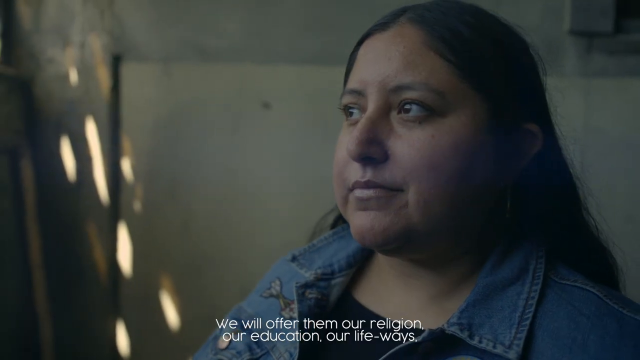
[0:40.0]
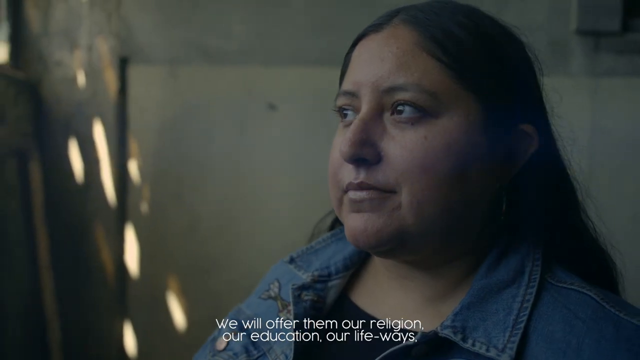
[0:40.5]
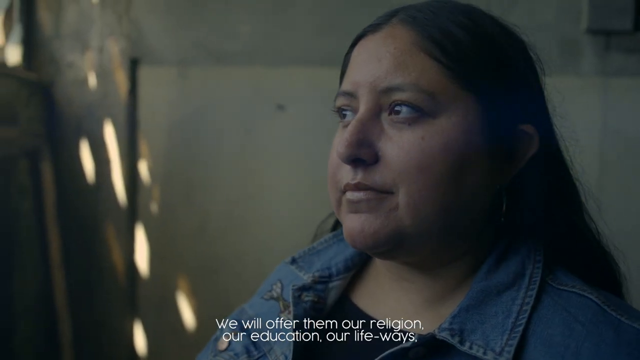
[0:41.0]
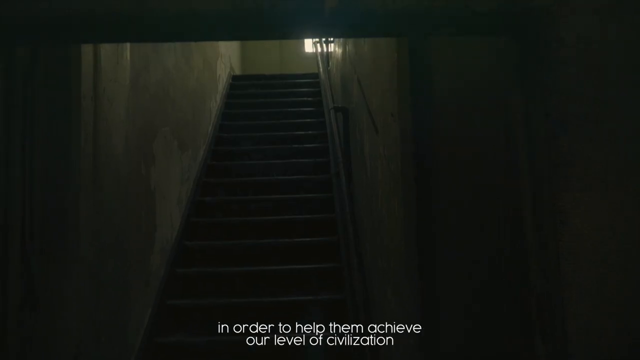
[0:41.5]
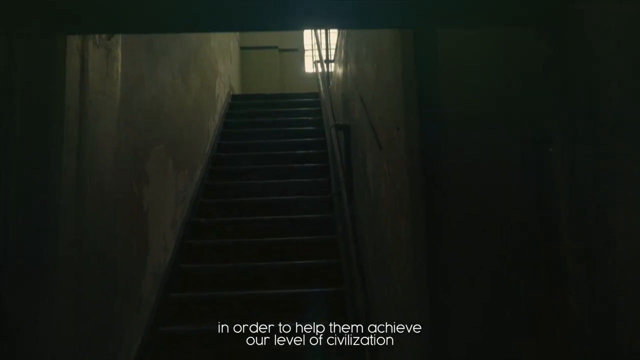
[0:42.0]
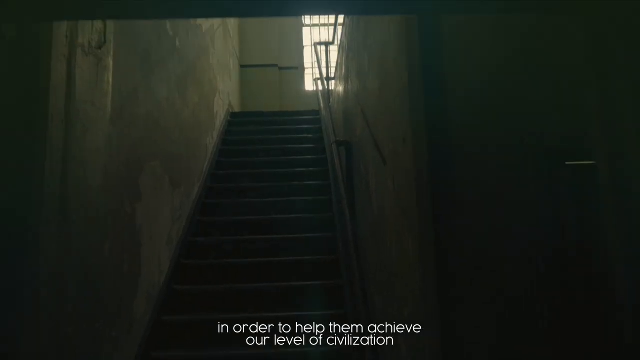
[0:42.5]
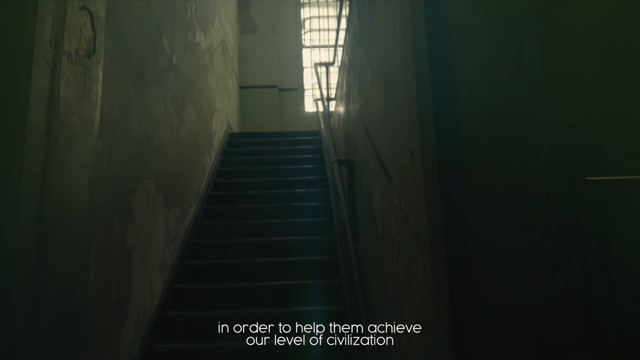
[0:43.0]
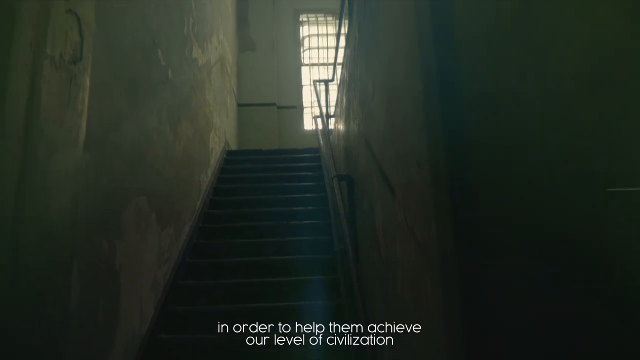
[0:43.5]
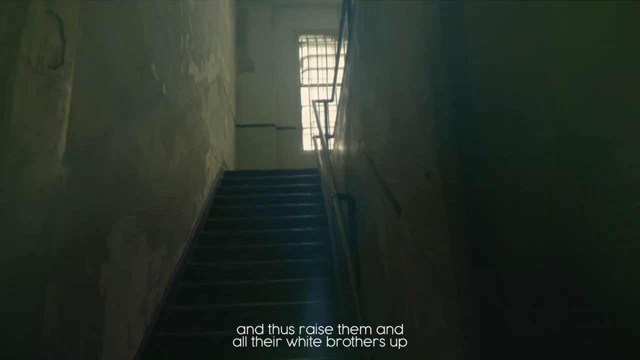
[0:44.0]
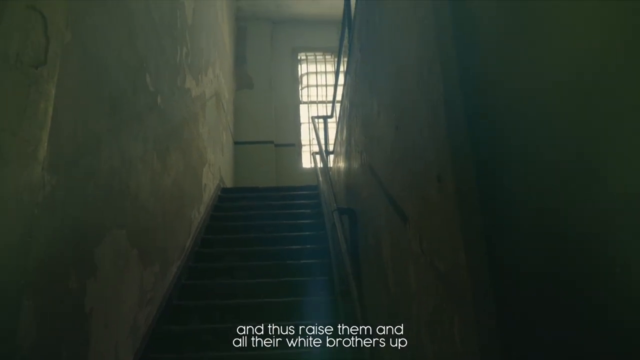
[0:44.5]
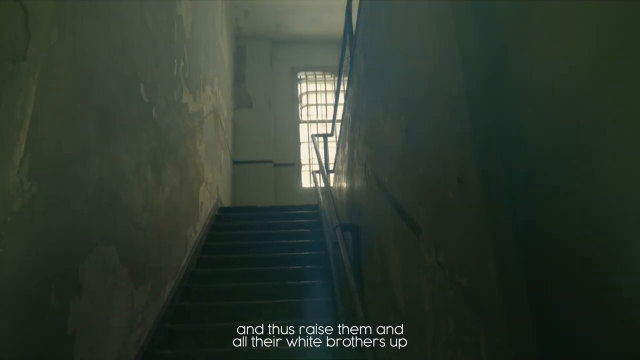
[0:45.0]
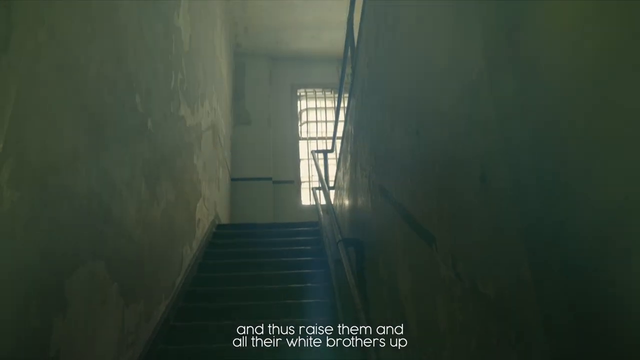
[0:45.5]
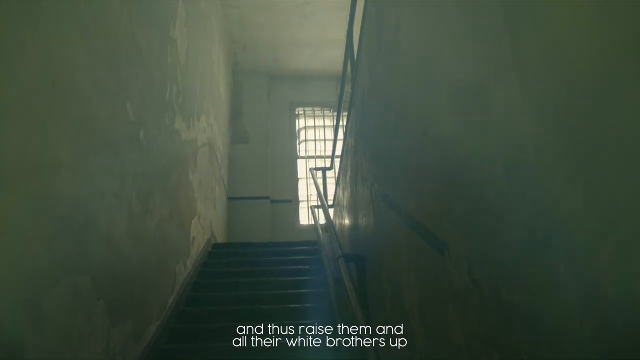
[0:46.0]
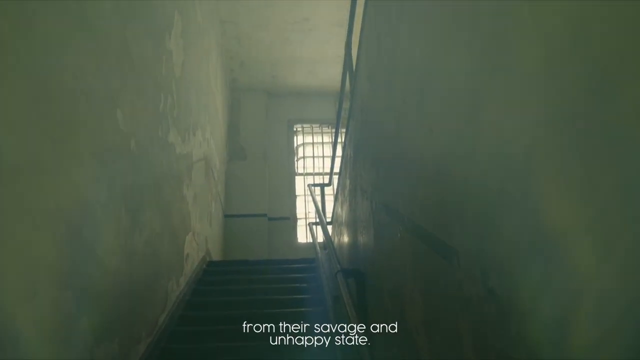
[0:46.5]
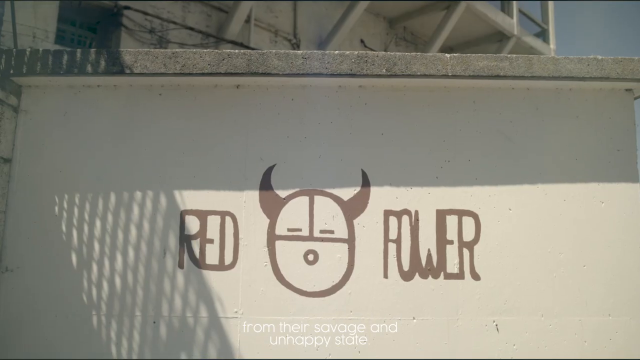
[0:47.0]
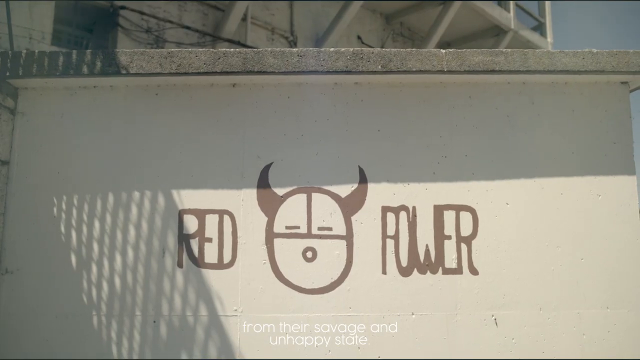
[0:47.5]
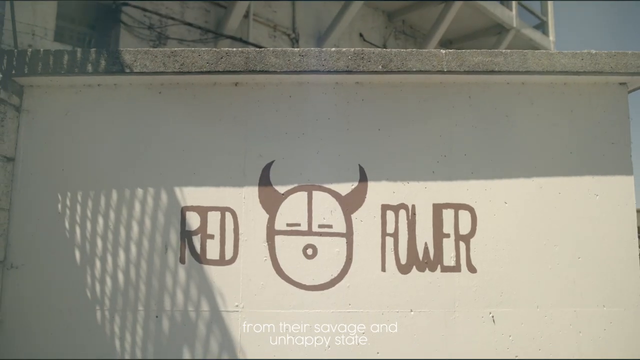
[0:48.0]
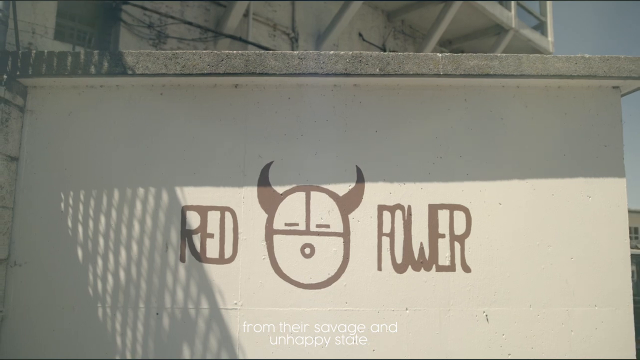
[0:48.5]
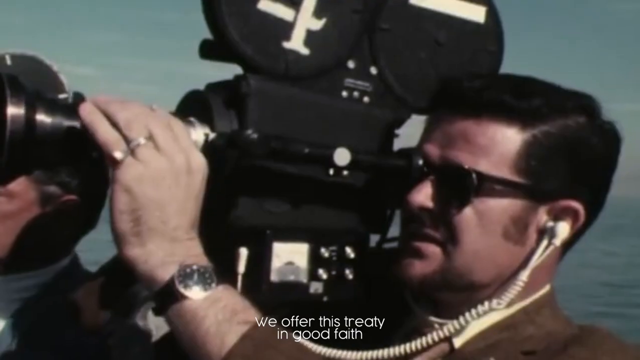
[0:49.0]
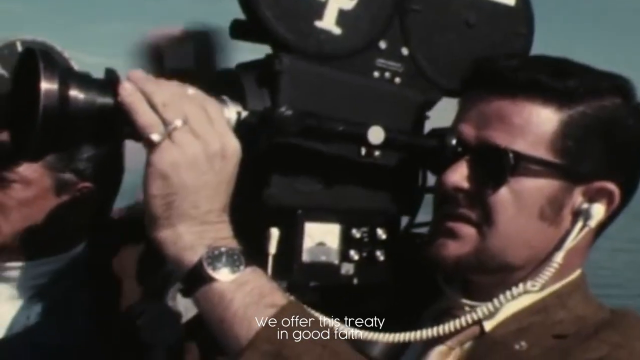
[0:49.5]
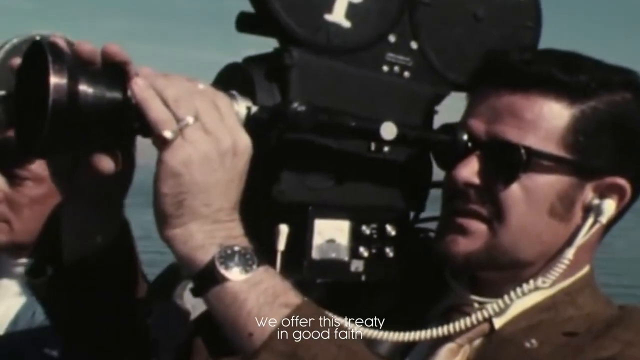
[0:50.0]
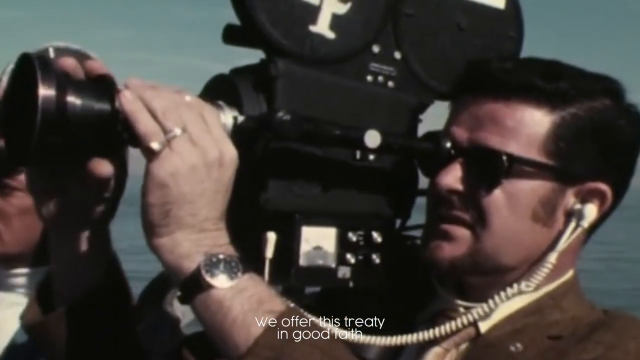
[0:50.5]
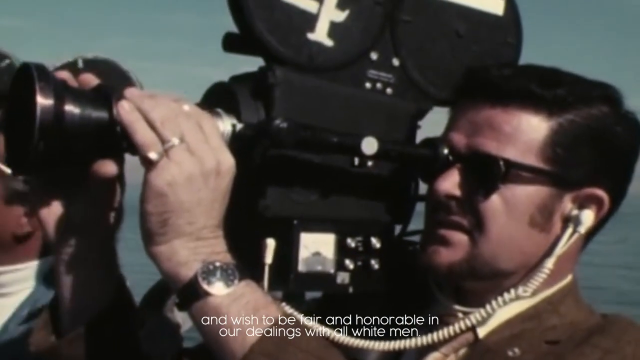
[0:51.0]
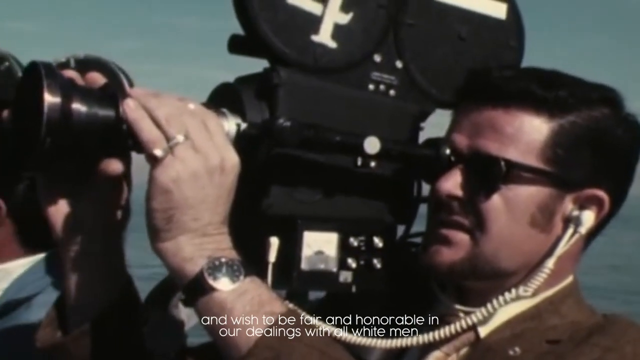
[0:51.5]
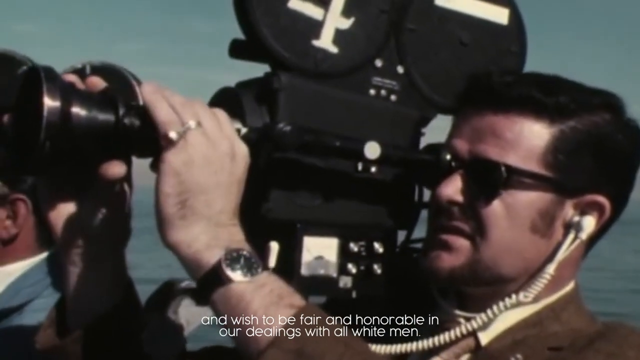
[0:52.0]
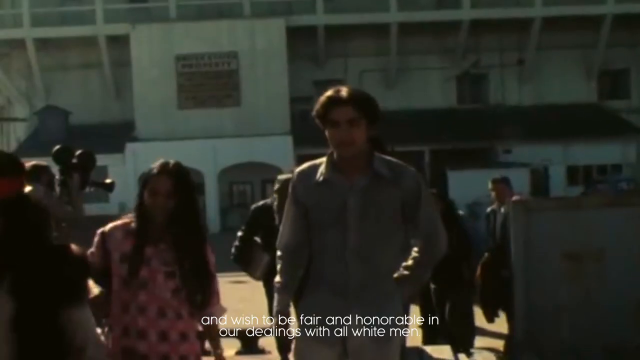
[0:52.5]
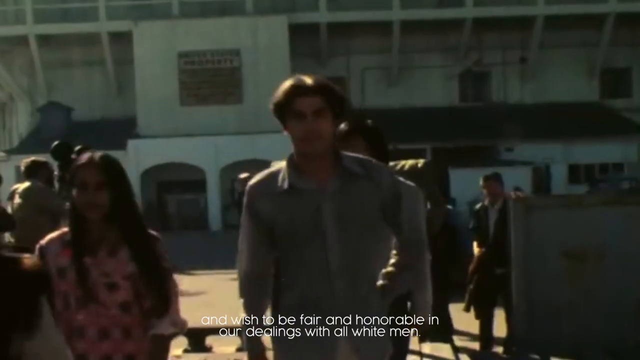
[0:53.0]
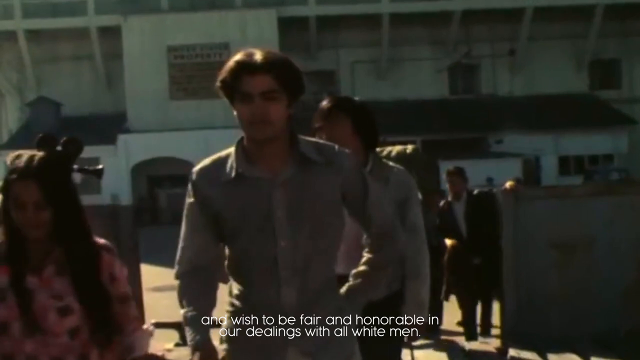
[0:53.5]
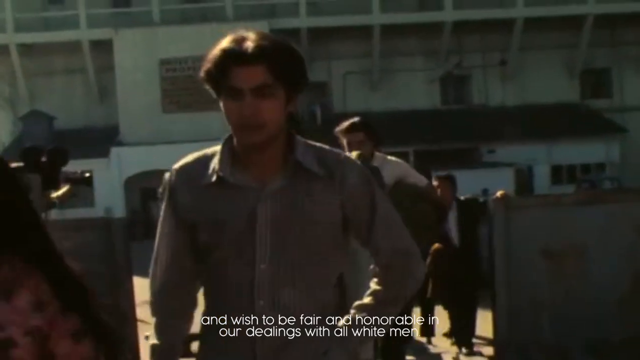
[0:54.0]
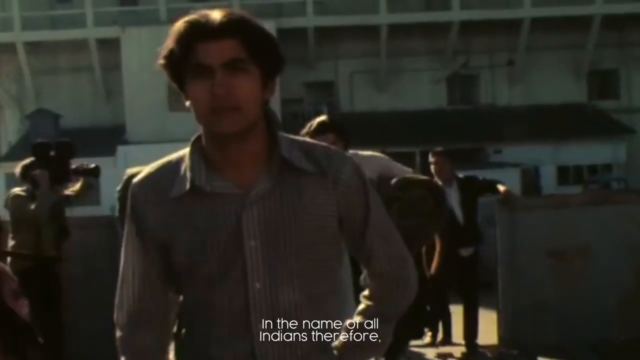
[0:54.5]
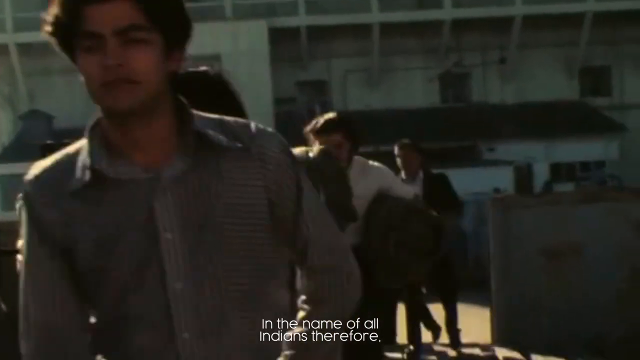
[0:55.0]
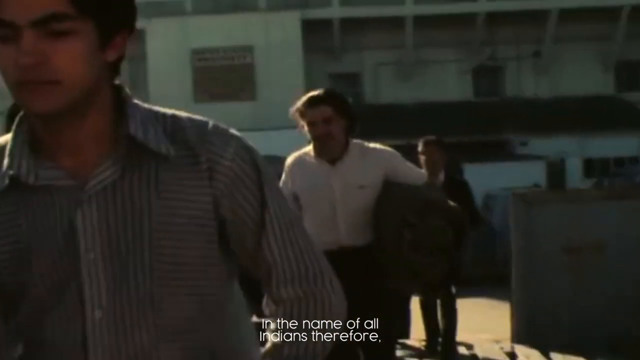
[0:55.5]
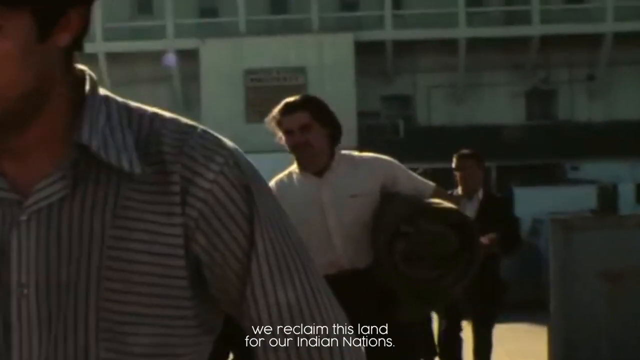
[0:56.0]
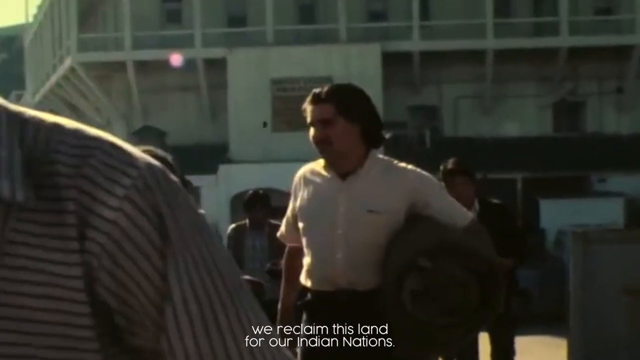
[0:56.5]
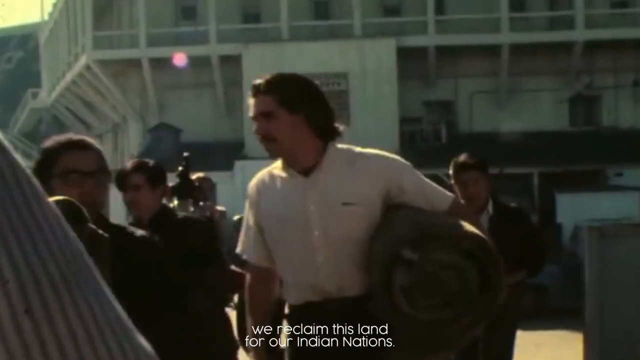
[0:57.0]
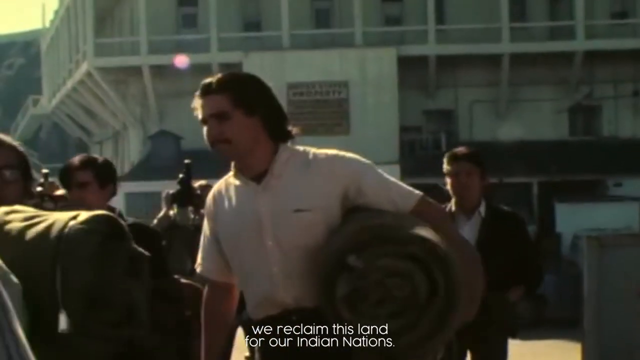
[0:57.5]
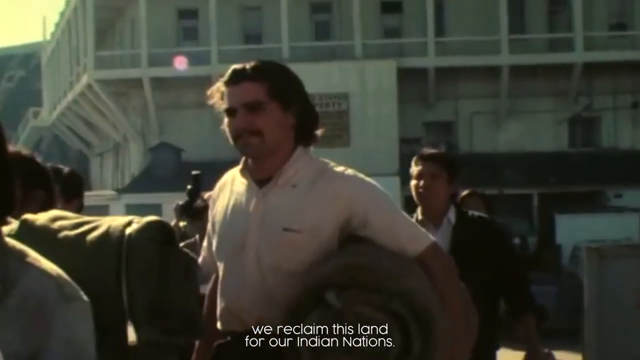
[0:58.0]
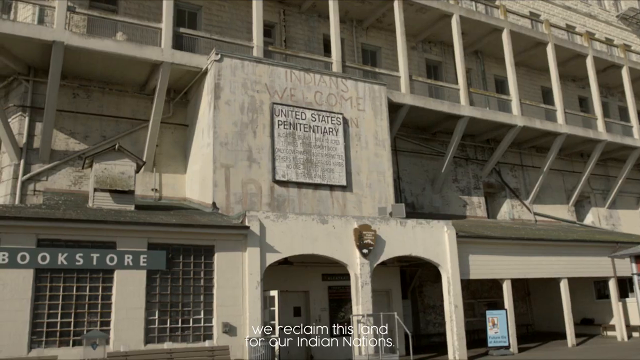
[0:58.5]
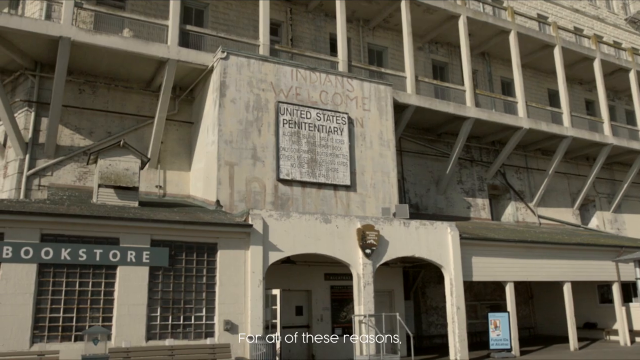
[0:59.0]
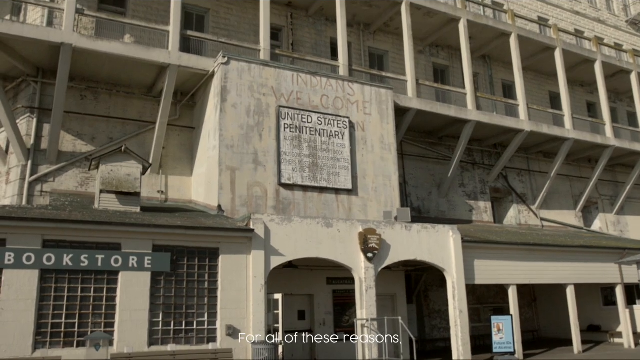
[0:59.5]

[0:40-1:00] A woman's face is in front of the camera as she looks to the left. She is older, probably in her 30s, maybe 40s, with long black hair going down her back, and appears to be of Hispanic descent. She wears a black shirt with a blue jean jacket. Behind her, the walls are a sort of grayish color, with some light poking in on the left side. She continues to look left, then the camera tilts into a sort of upward position, looking up the stairs inside a building. A large window is covered by bars. The scene changes to a wall outside the building with a drawing that says "Red Power", with a devil between the two words. Next, a man looks to the left holding a large black video camera. He has black glasses, a white skin tone and short black hair, appears to be wearing a white hearing device in his left ear, and has a watch on his left wrist. The scene changes to a group of men and women walking toward the camera, appearing to come out of a building, maybe leaving the prison. A front shot then shows a sign on the front of the building stating "United States Penitentiary", with a bookstore sign at the bottom.